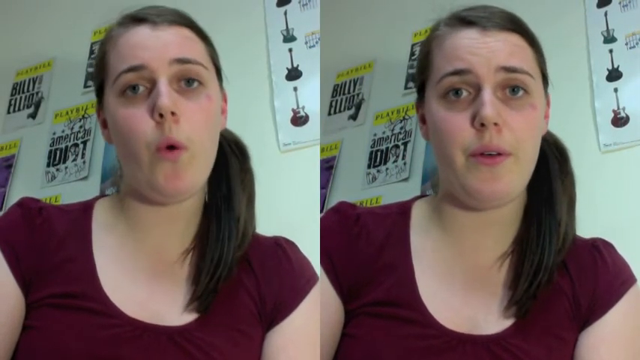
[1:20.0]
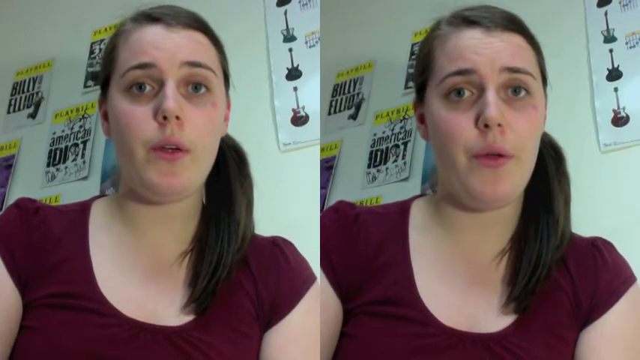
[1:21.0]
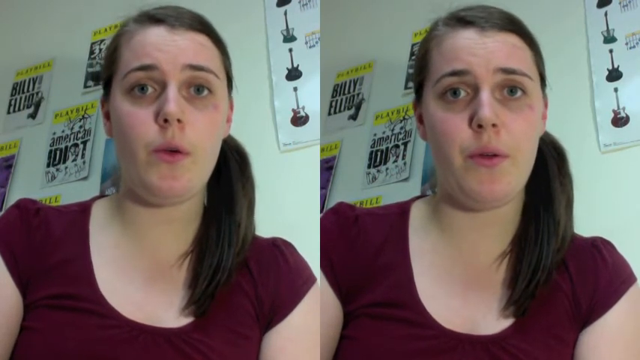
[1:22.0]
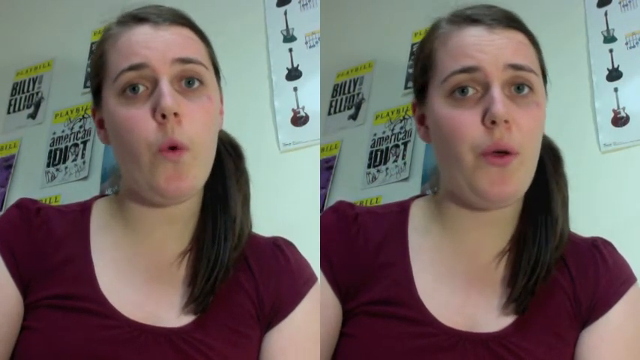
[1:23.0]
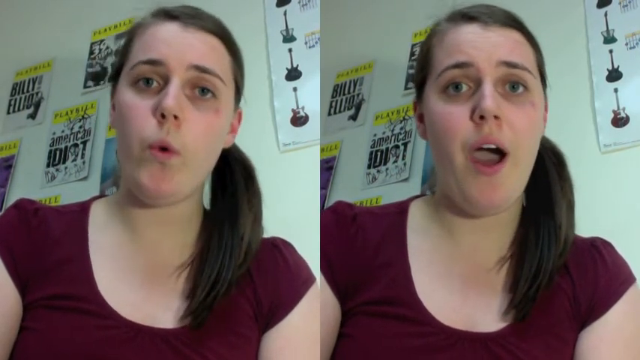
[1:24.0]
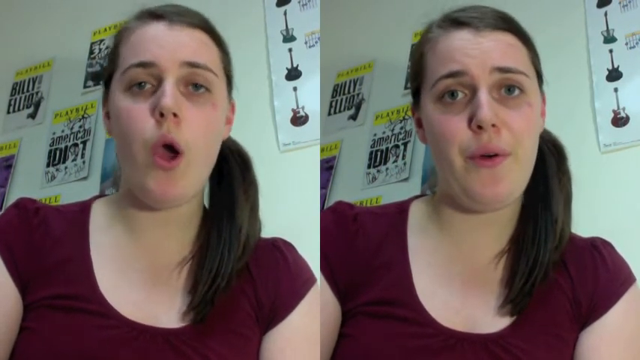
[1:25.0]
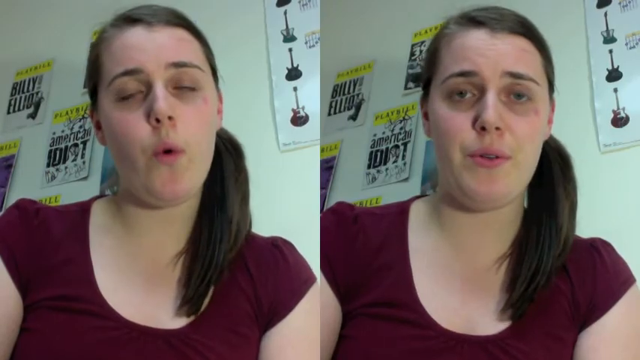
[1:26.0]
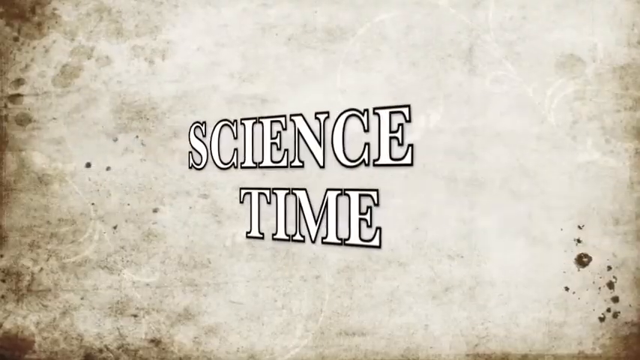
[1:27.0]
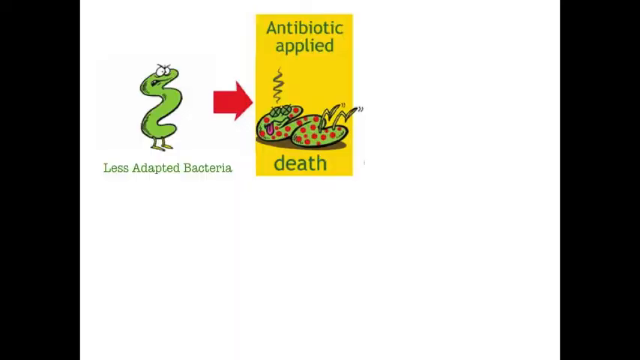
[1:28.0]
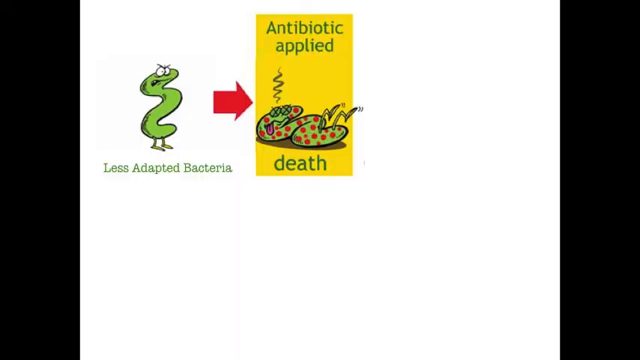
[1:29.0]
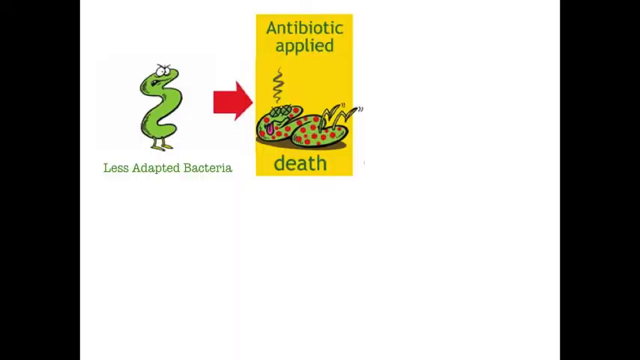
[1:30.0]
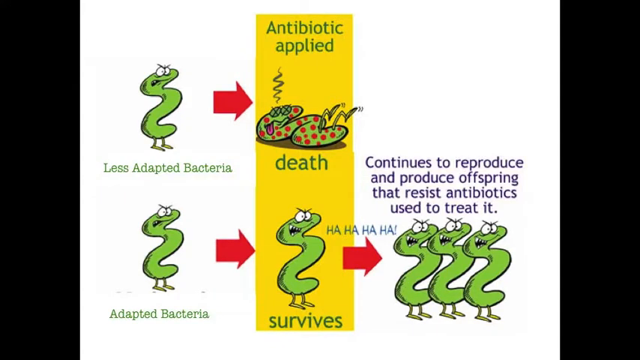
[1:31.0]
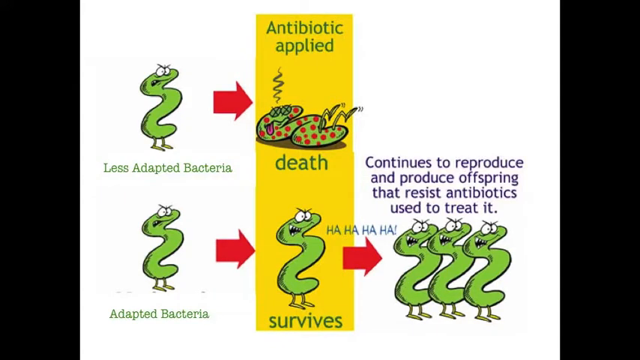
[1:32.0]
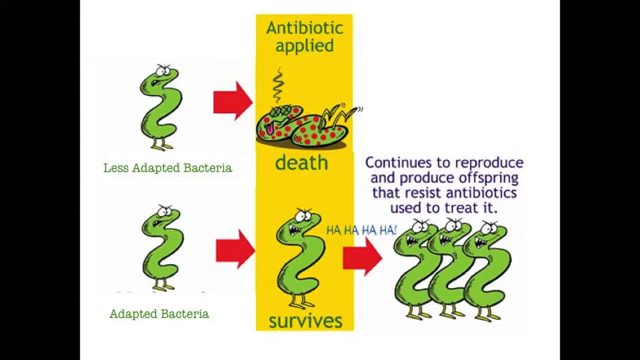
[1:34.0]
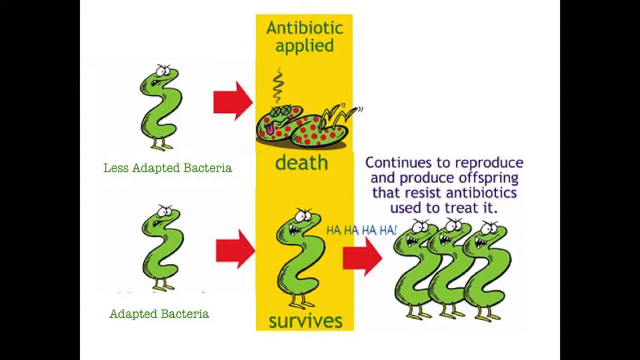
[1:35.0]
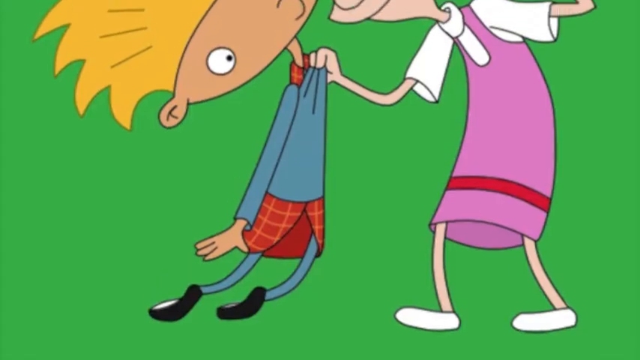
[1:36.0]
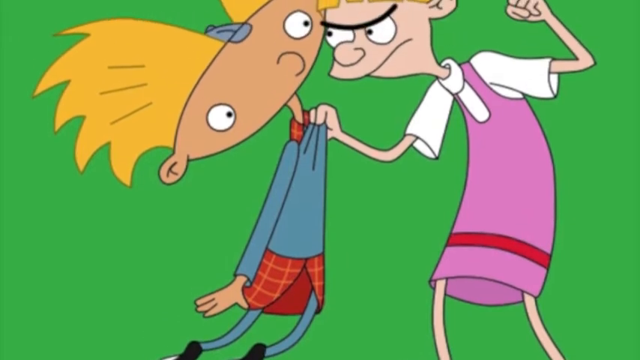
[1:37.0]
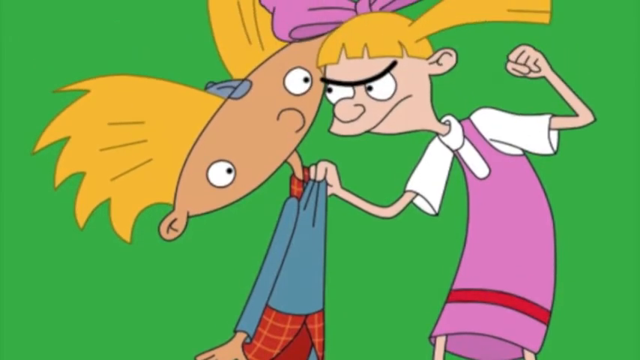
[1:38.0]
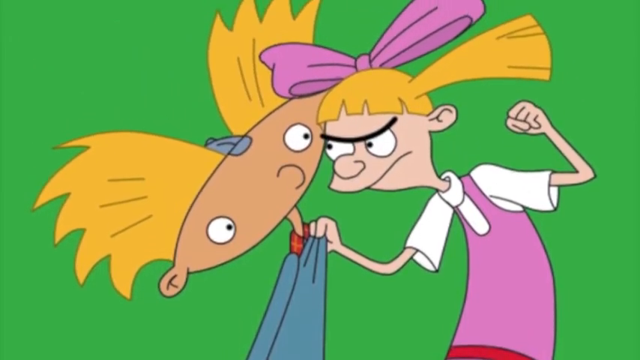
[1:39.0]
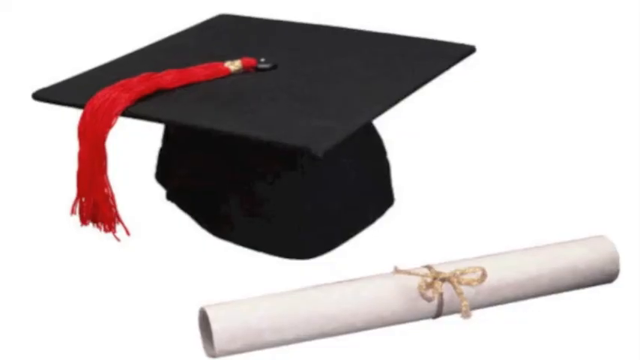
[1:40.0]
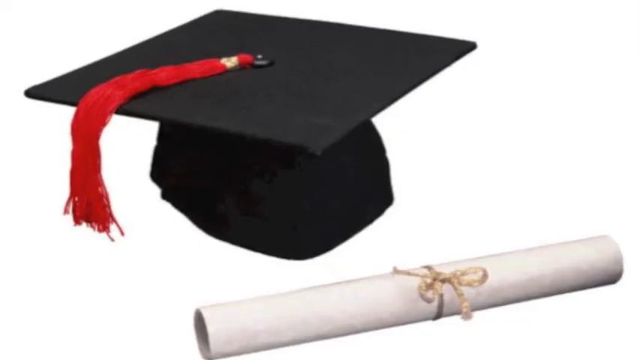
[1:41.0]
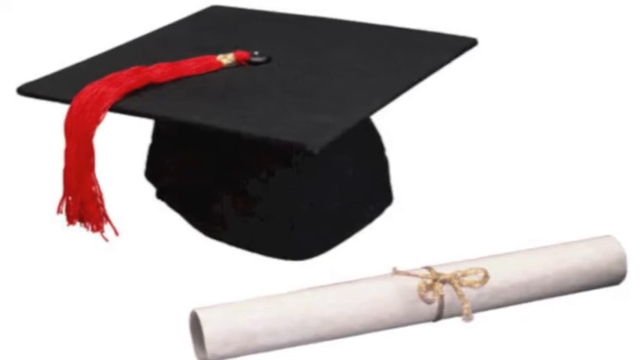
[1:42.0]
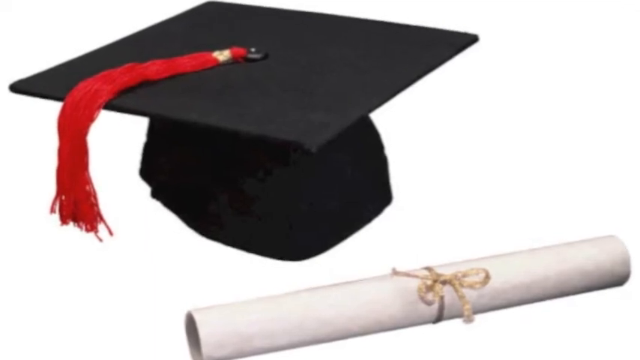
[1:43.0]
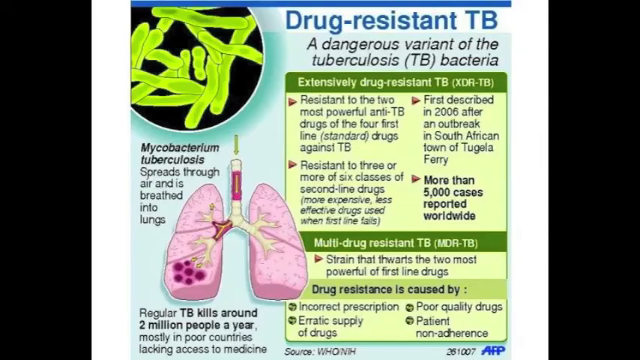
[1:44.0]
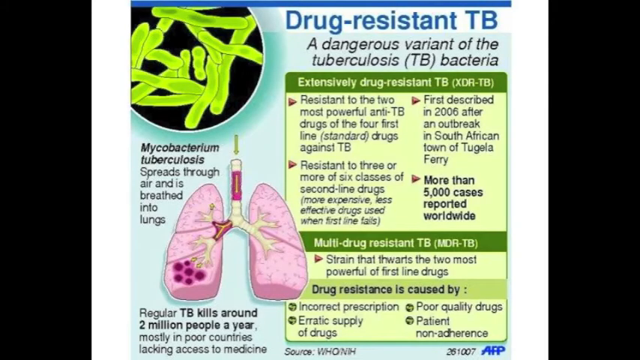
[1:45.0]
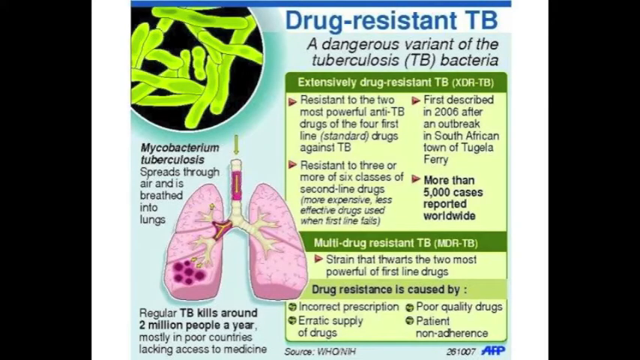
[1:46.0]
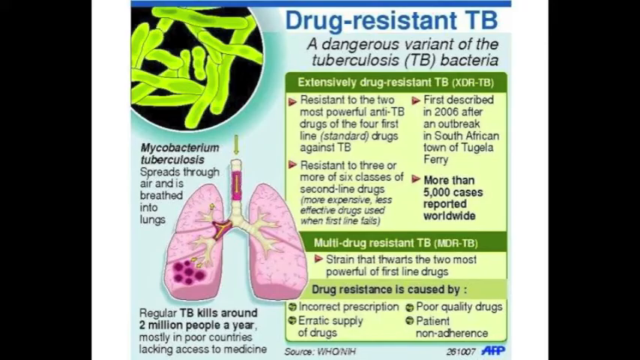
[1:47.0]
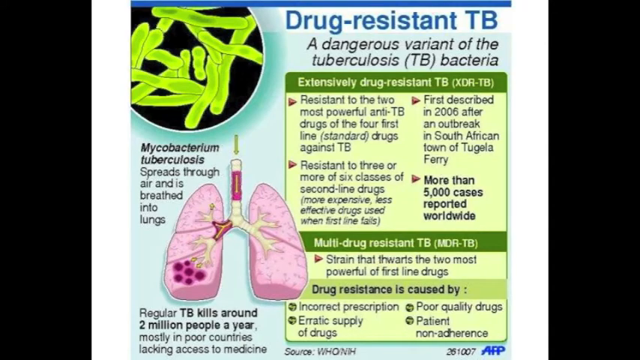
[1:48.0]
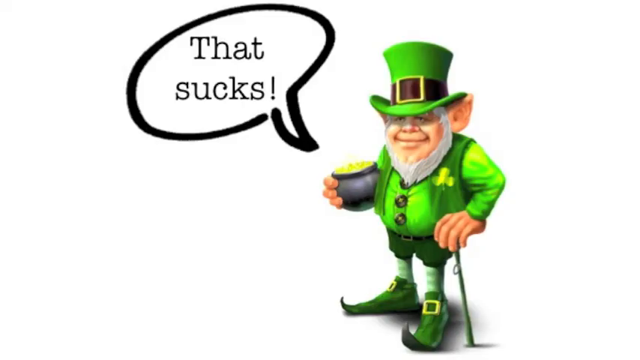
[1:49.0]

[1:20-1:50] A split screen shows the girl making different faces on each side and moving her head. Then "science time" appears, showing adapted bacteria in yellow, the text "antibiotic applied" and dead bacteria; this antibiotic-applied graphic is like a little poster that appears one piece at a time, with little red areas, and at the bottom the bacteria survive and turn into three. Two Hey Arnold characters appear, Arnold and a girl with blonde pigtails; it looks like Arnold is about to get punched in the face by the girl, but he doesn't look scared. A graduation cap and a scroll follow, then a poster about drug resistant TB showing lungs and what looks like bacteria. A smiling leprechaun holding a pot of gold tilts his head a little, with "that sucks" in bubble letters. When the girl is on screen she whistles and makes weird faces, with the split screen showing the guitar poster, and "science time goes viral" appears. The visuals are very bright and colorful.